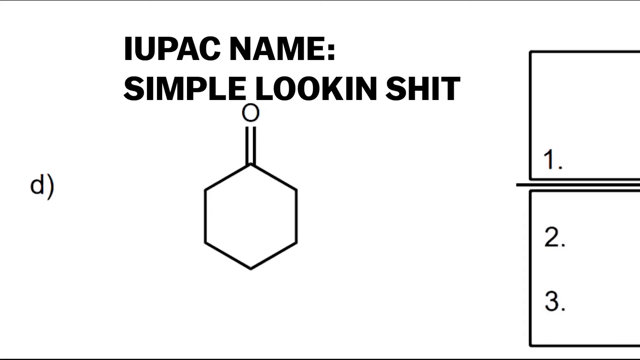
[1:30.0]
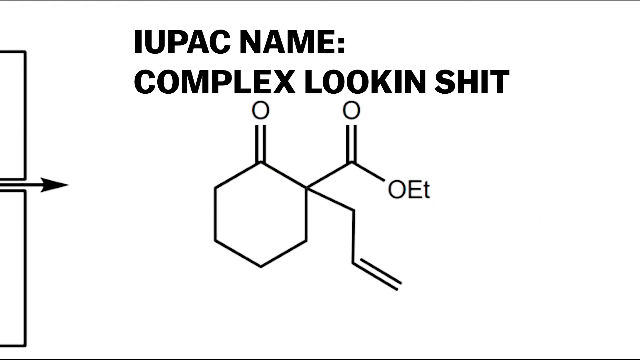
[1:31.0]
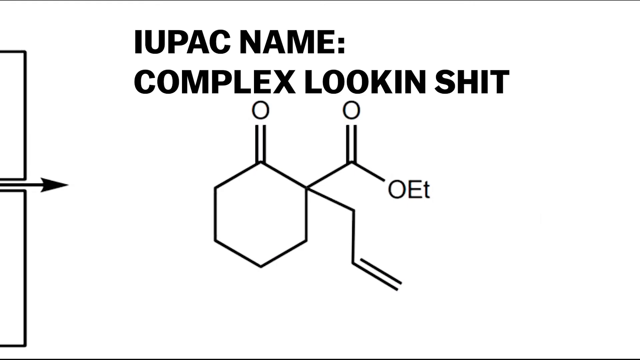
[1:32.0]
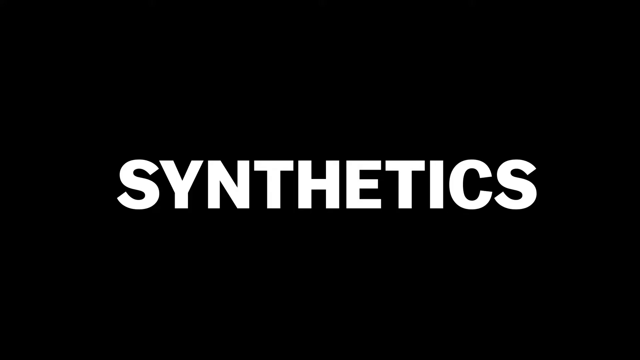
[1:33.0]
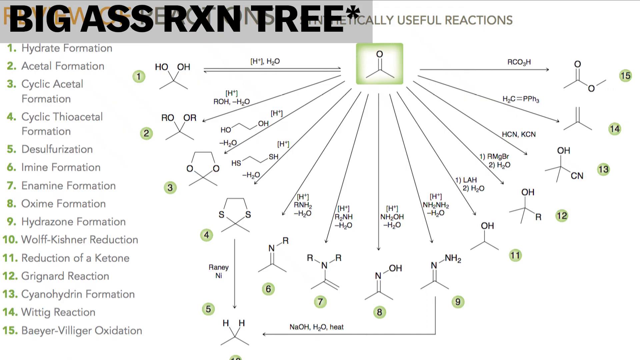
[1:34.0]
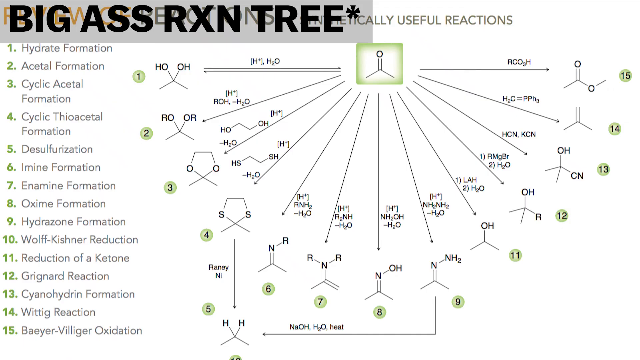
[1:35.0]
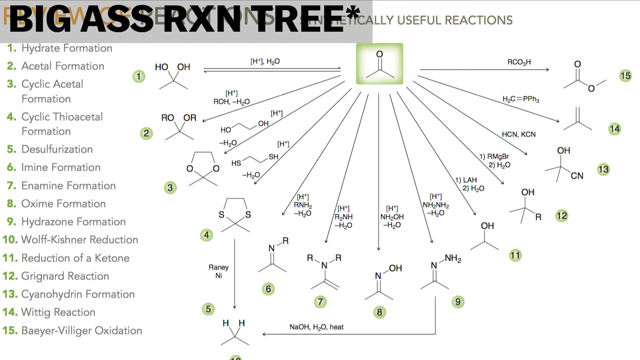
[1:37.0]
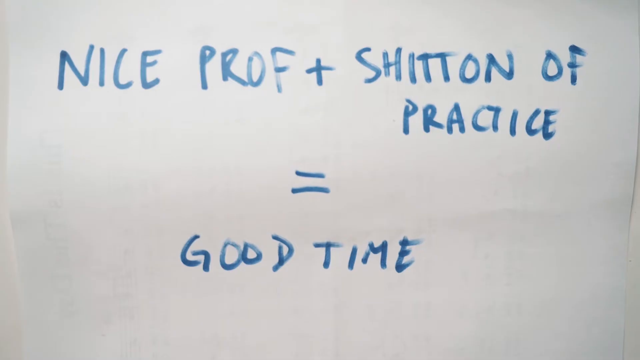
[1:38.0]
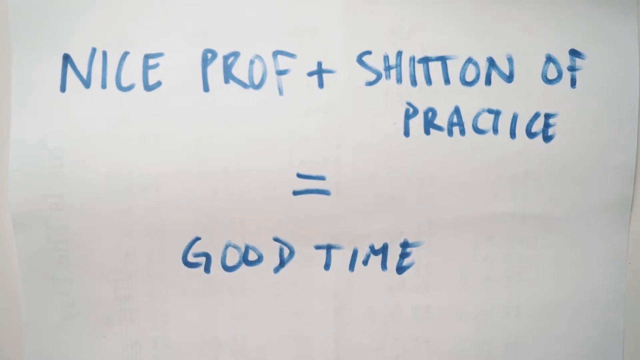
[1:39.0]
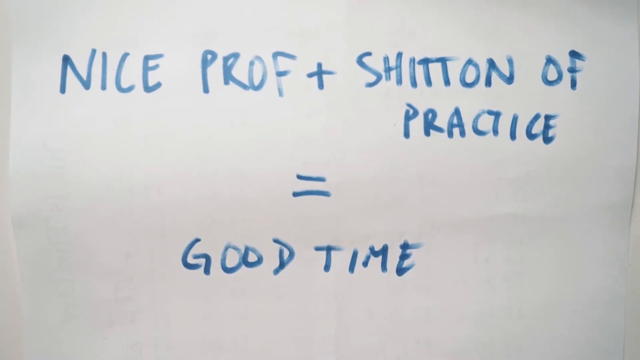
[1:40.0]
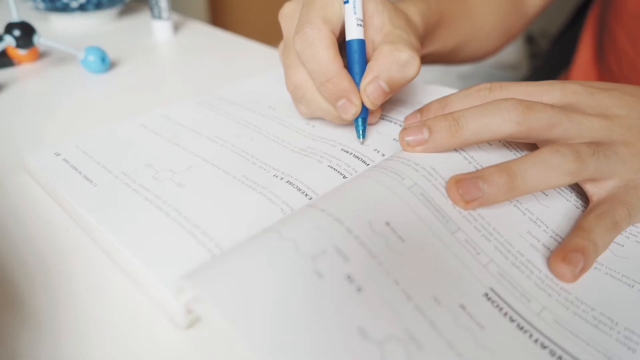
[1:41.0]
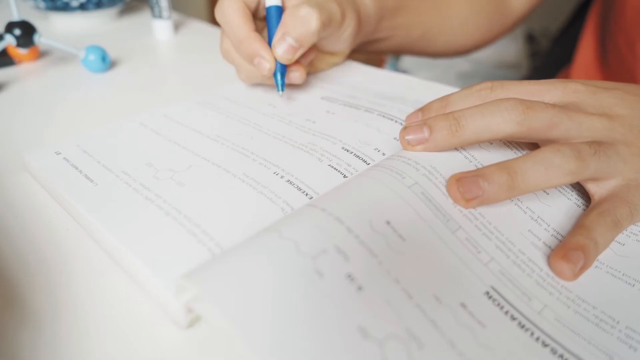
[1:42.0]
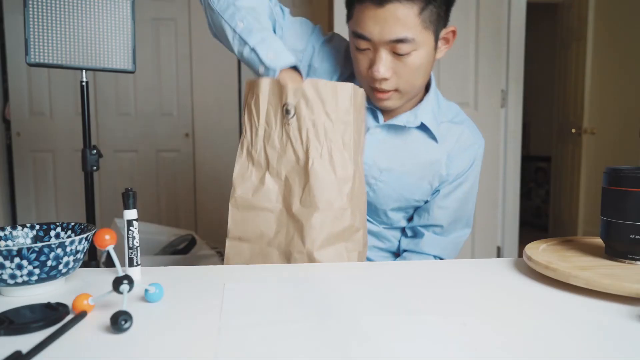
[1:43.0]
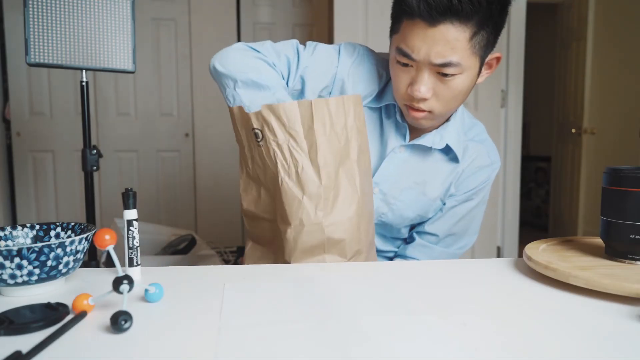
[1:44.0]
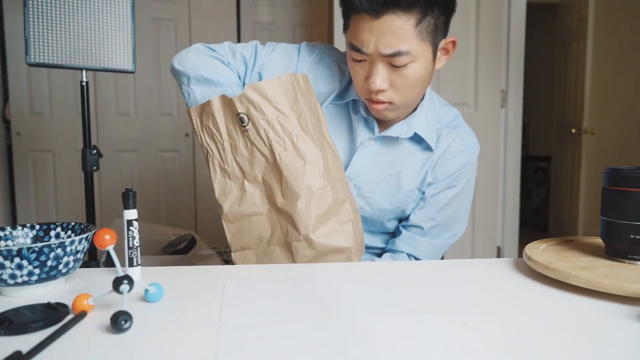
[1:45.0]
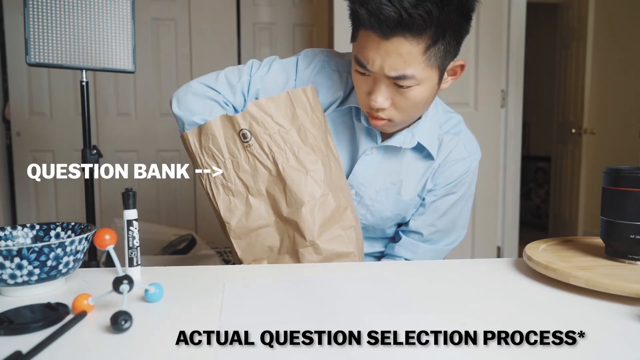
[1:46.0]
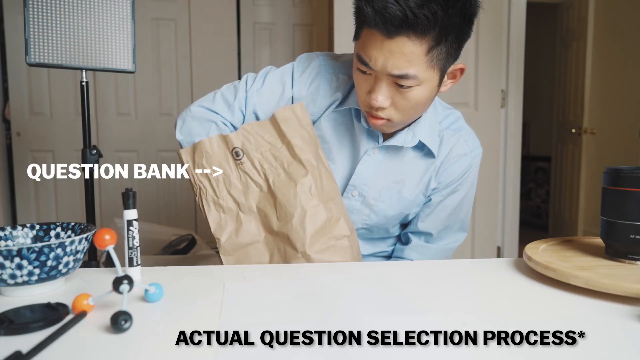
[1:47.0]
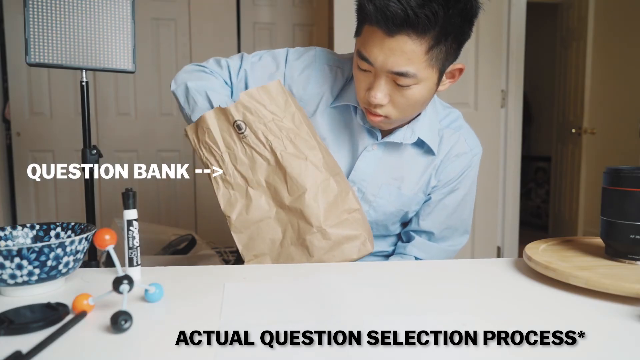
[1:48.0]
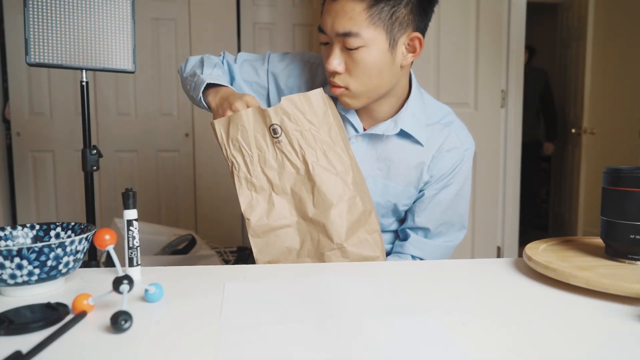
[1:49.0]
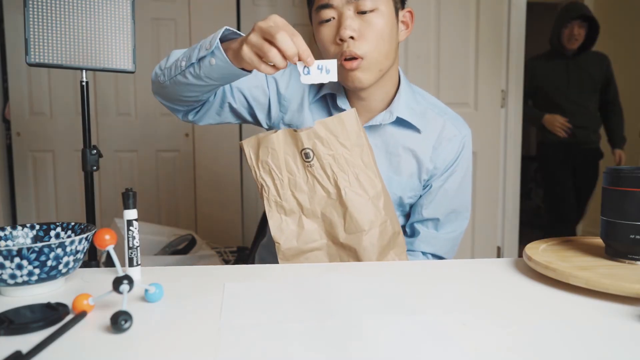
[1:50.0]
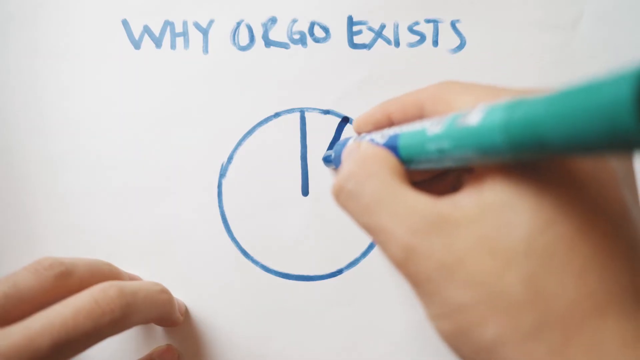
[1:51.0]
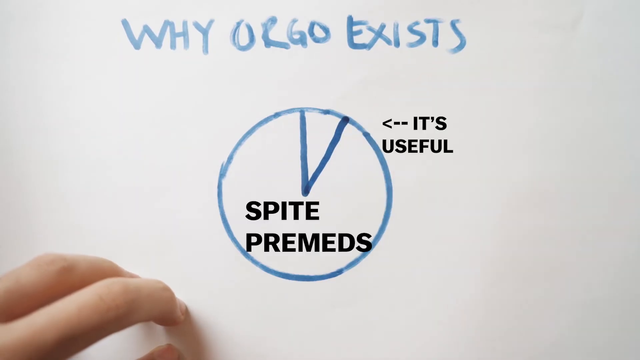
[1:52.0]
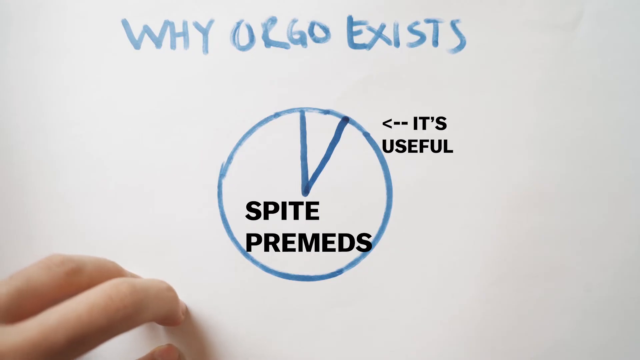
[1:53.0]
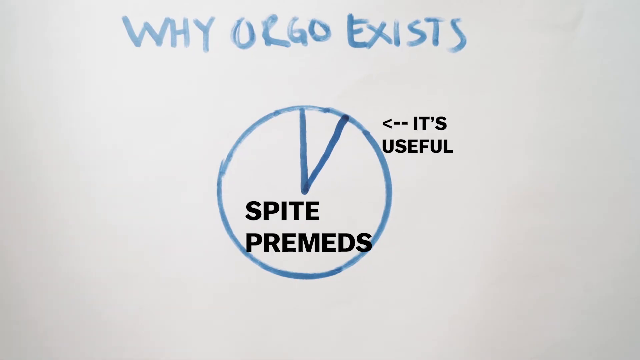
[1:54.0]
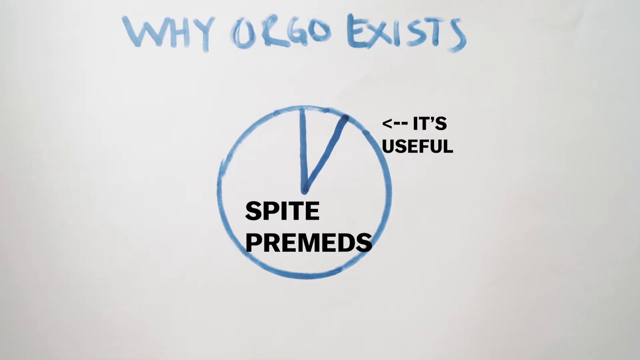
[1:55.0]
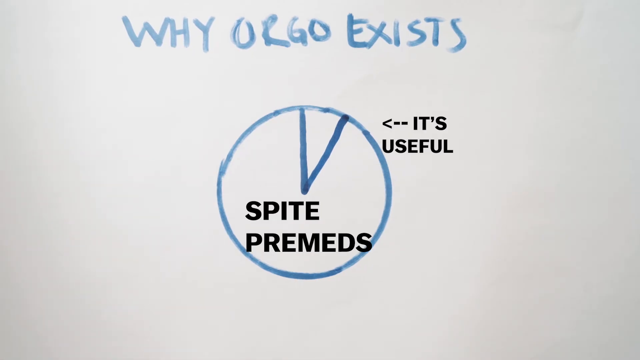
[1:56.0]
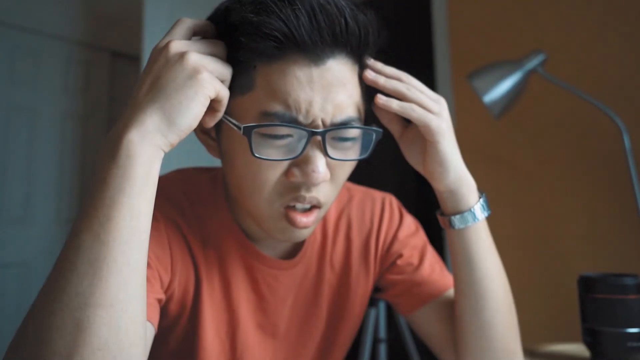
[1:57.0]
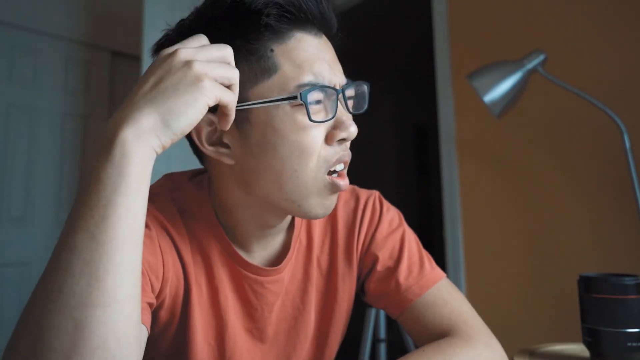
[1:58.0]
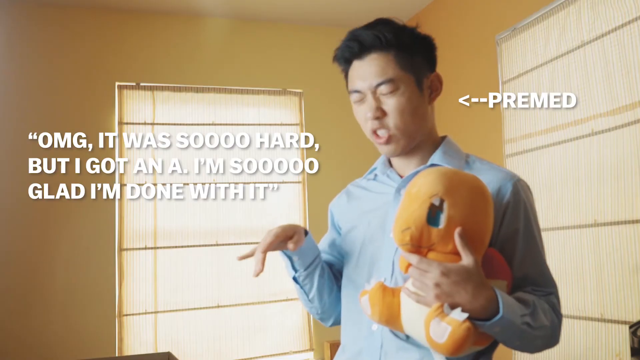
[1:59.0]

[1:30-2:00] Molecules go from simple-looking to more complex-looking, with text labeling them first "simple looking shit" and then "complex looking shit". The word "synthetics" appears in white over a black background. Next comes a tree of many reactions, with black text over the title of the image beginning "big ass". A drawing board then reads "nice prof plus shit ton of practice equals good time". The student has some paper and takes out what seem to be questions, then draws on a board about why orgo exists; he says it is more out of spite than for a reason.